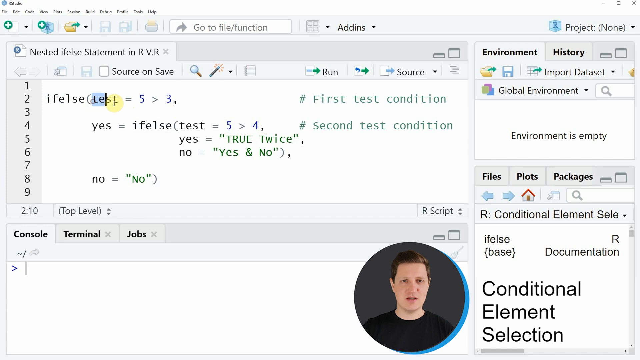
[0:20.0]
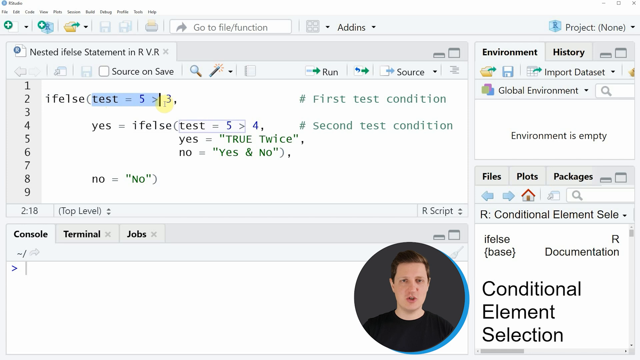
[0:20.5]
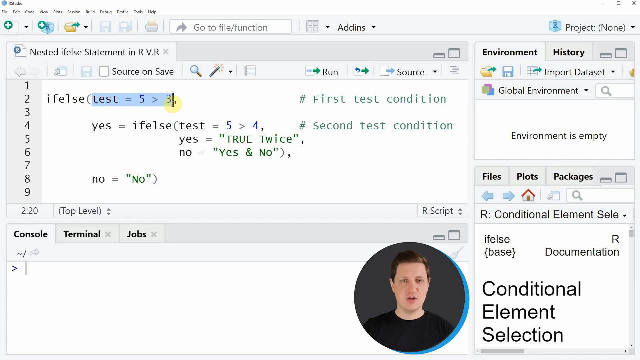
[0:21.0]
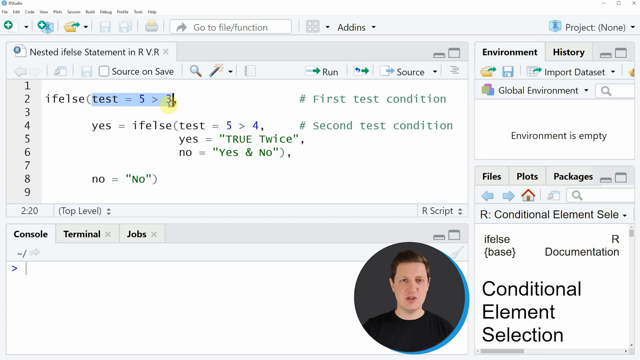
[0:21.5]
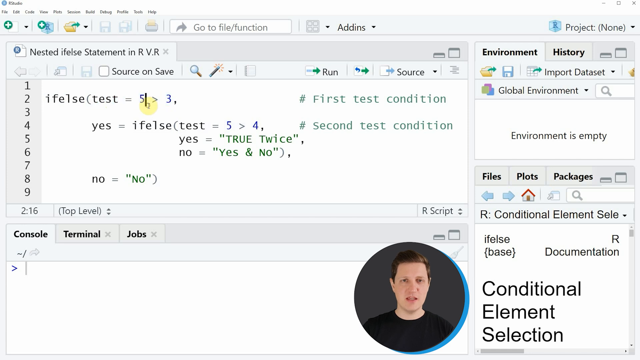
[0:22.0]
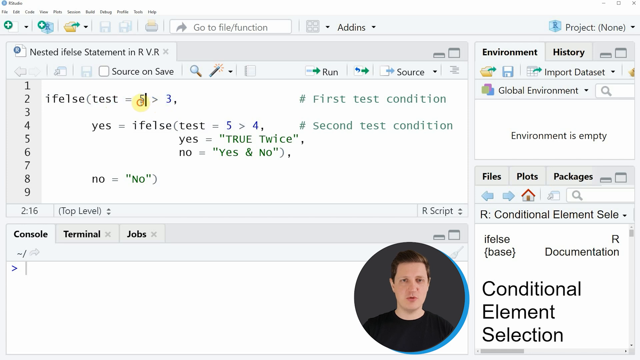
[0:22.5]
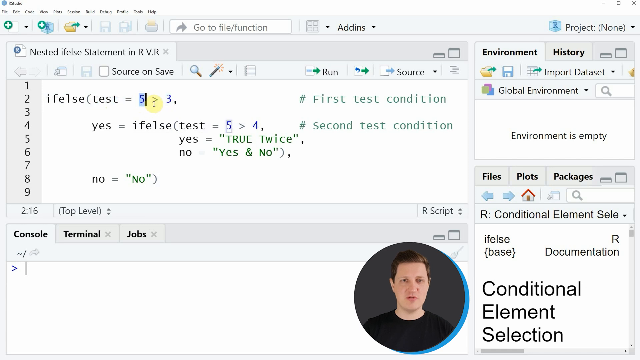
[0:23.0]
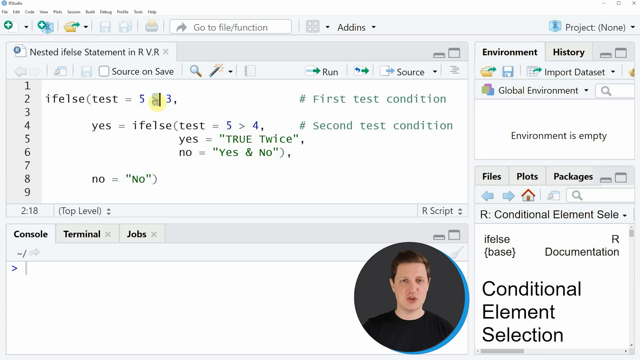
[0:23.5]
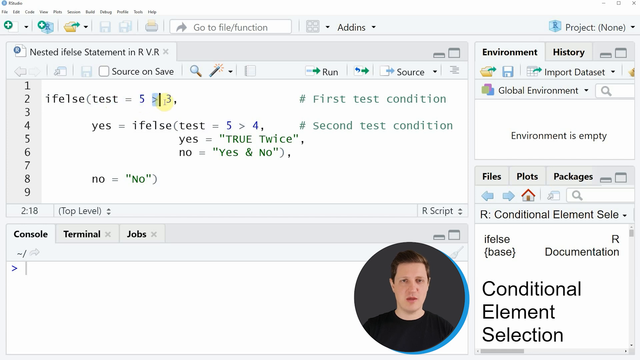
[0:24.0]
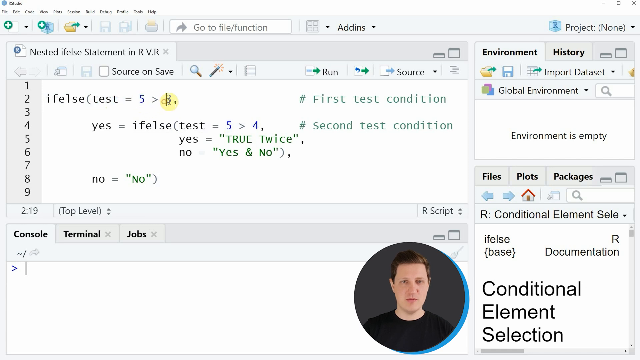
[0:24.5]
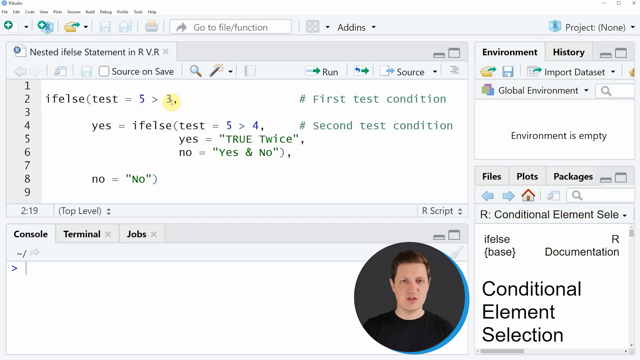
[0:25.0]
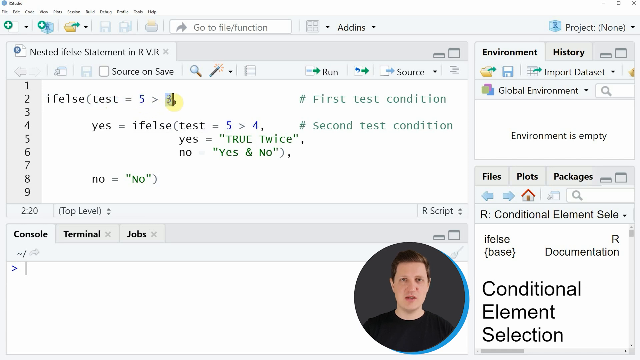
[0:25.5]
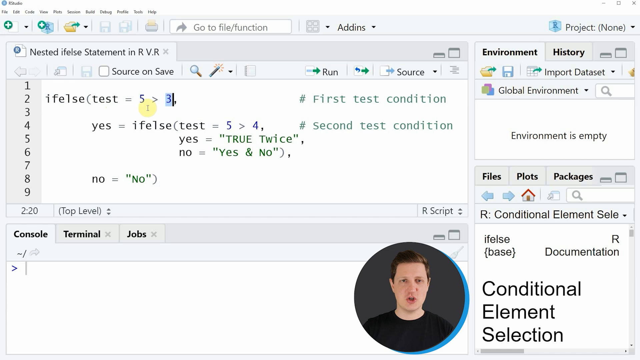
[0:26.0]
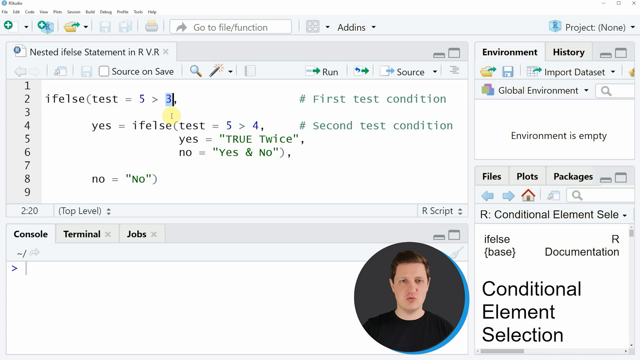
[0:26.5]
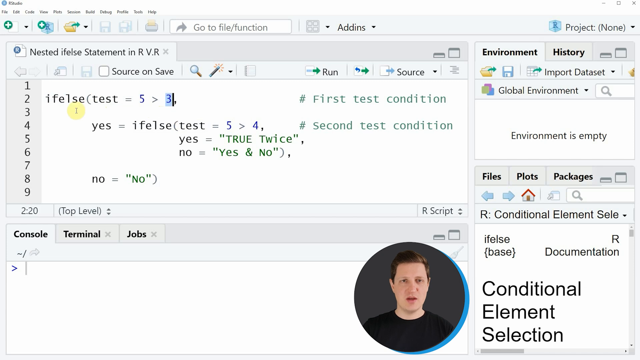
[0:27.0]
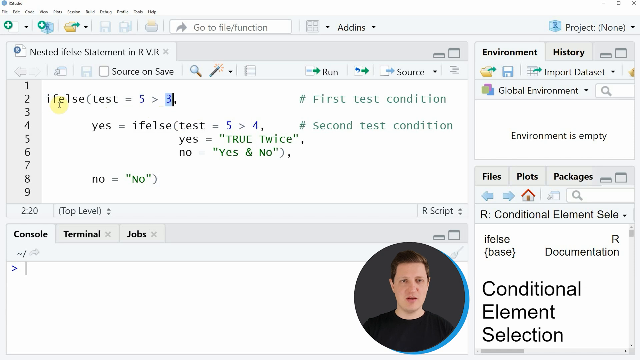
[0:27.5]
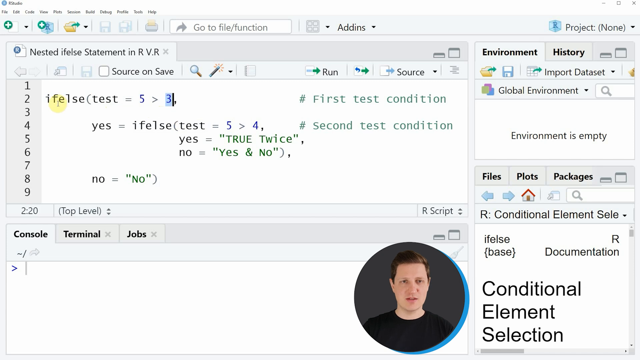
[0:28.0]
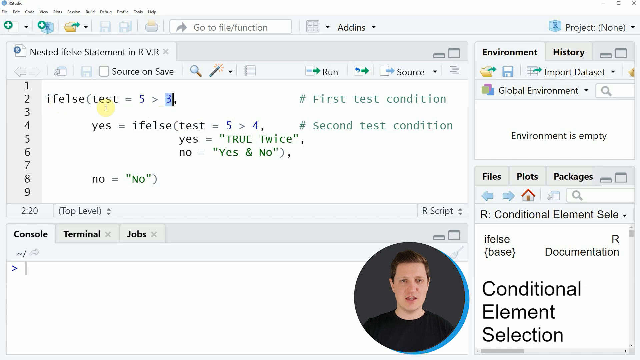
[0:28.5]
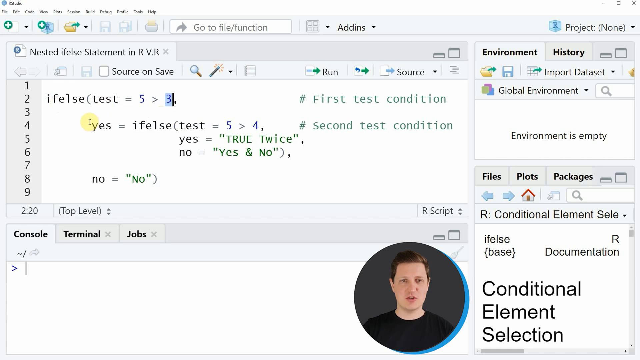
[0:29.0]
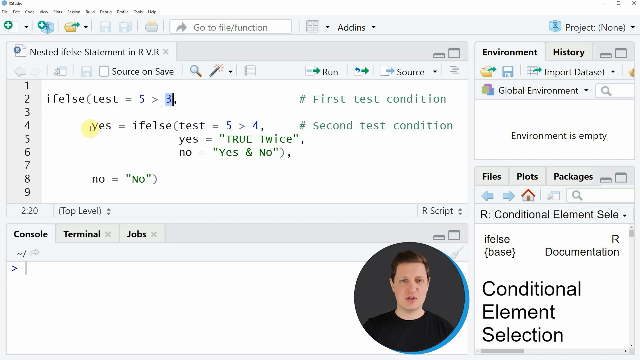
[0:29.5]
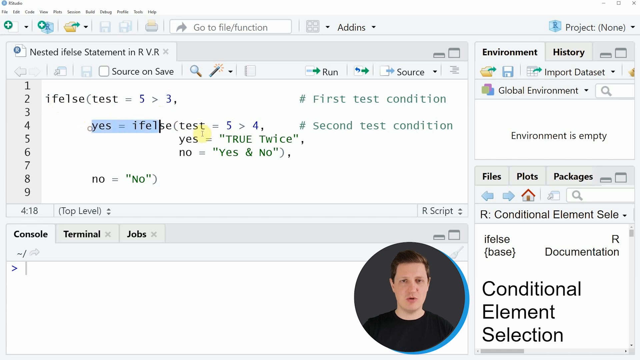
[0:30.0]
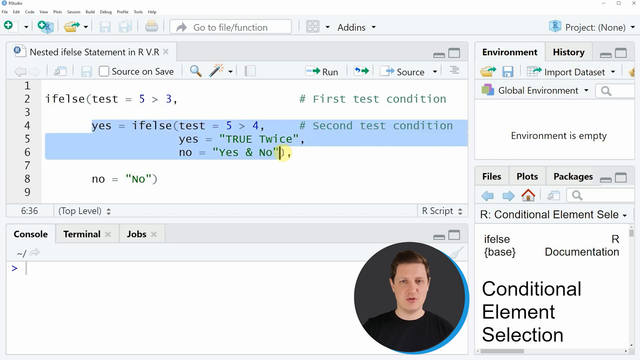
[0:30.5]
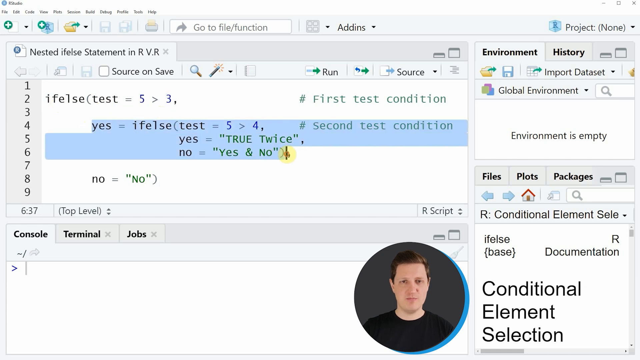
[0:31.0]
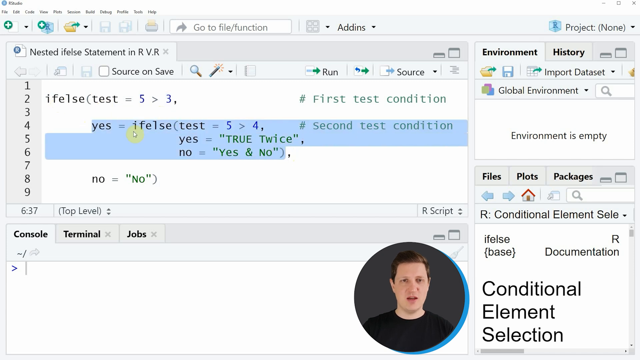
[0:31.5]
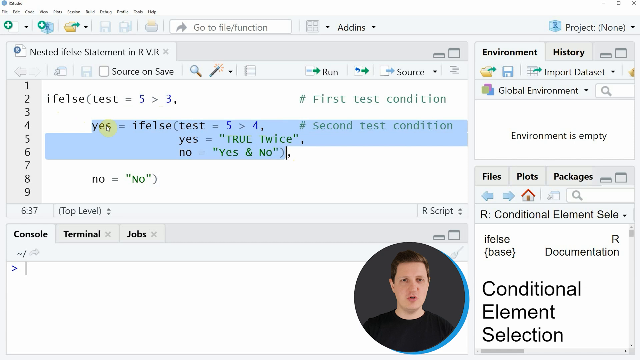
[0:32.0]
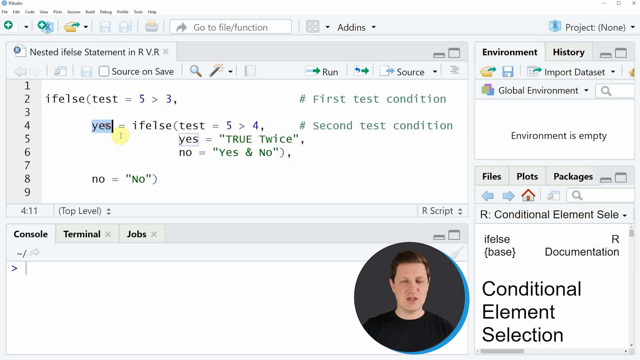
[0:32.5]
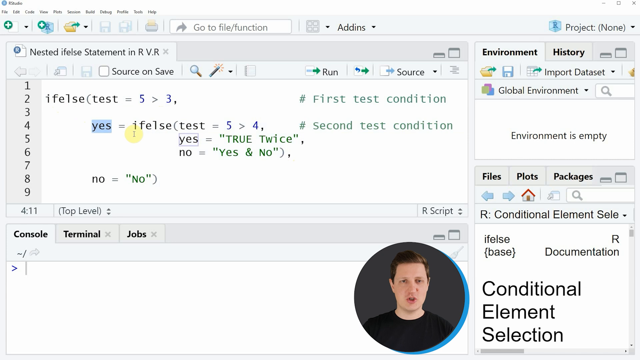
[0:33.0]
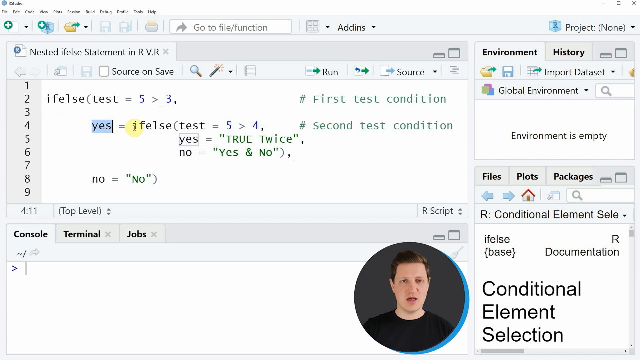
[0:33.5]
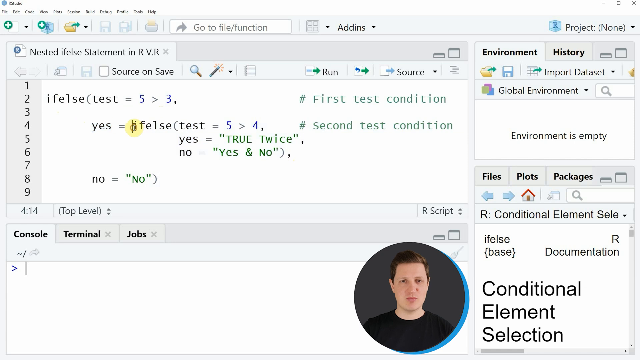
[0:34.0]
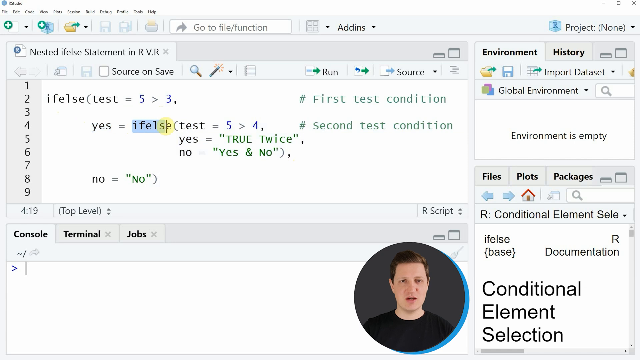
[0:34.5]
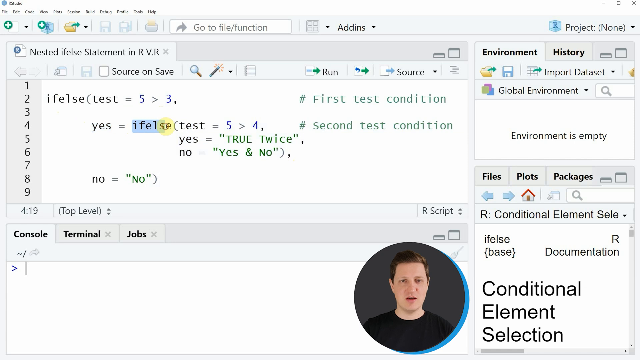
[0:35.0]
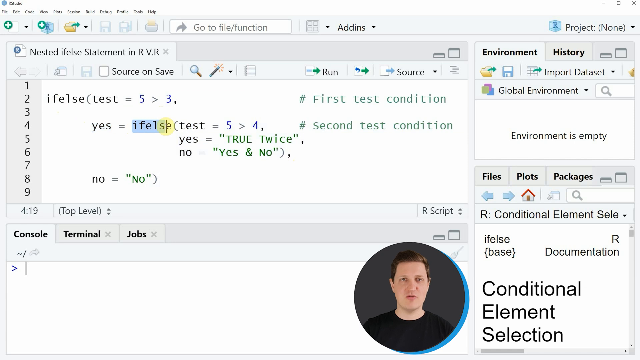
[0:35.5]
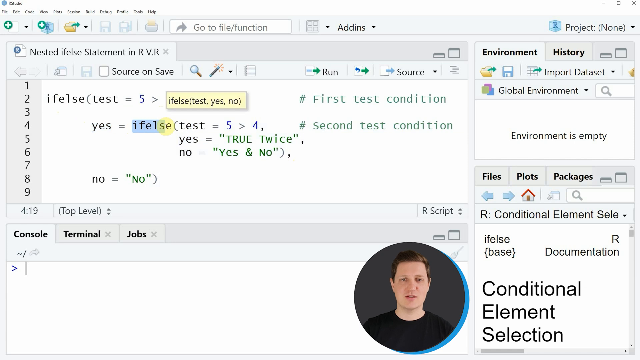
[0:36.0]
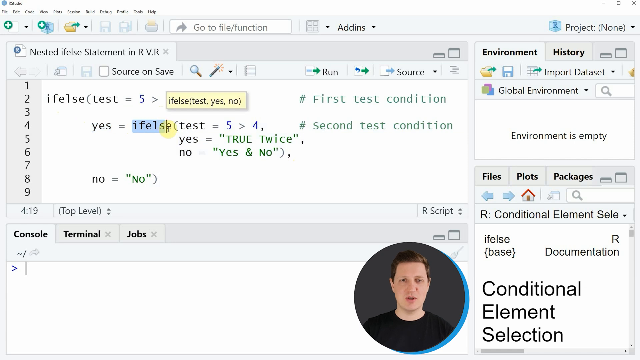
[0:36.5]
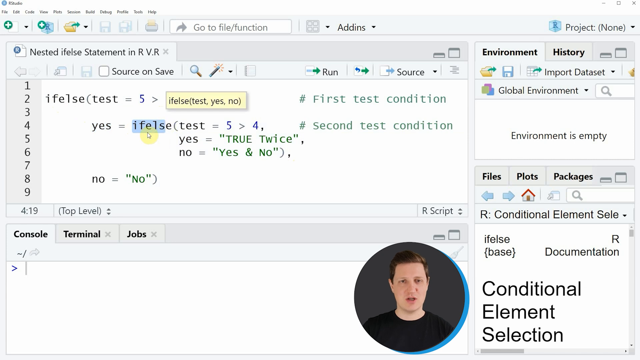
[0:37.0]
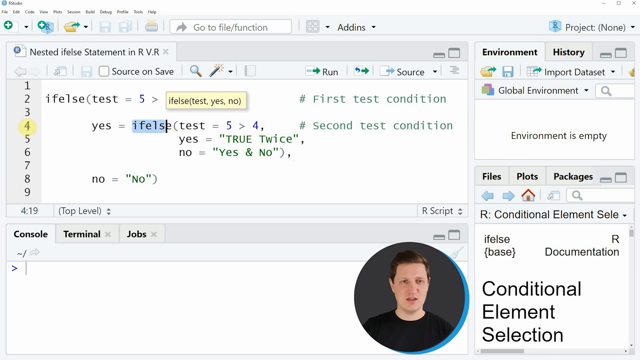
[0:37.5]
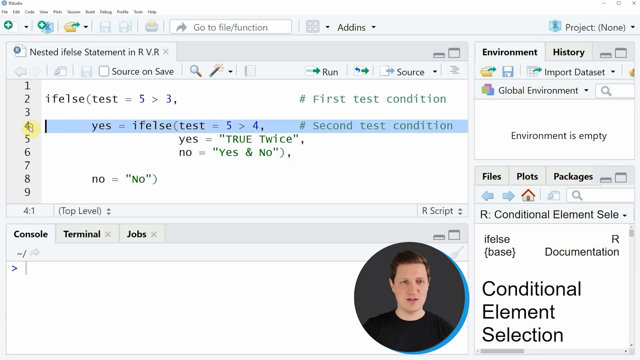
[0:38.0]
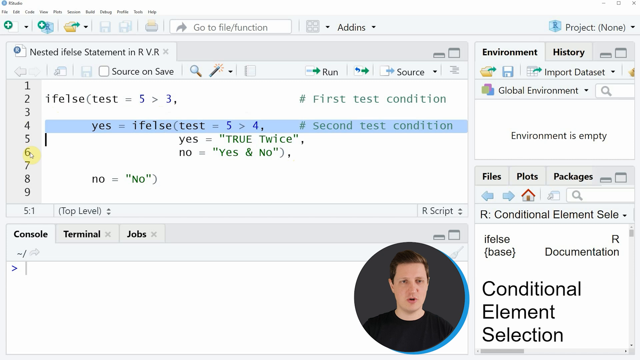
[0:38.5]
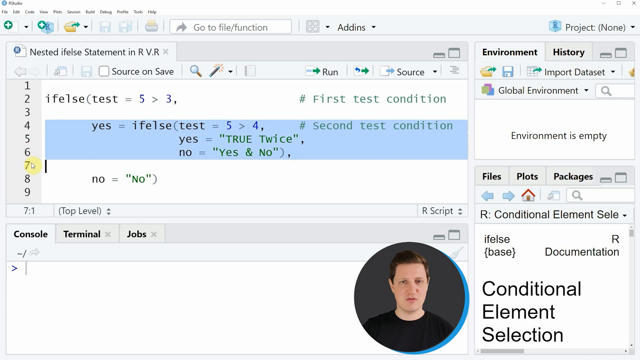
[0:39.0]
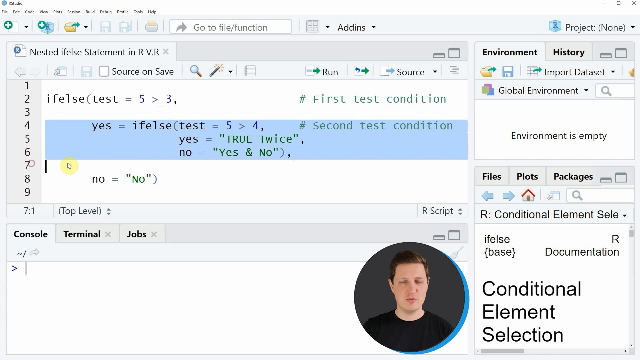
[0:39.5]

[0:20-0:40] The cursor highlights the text on line 2 that says "test = 5 > 3", up to the comma, giving it a blue highlight. He then highlights only the 5, then only the greater-than sign, then only the 3. Moving down to line 4, he highlights all of its text, including the comment "second test condition", then all of the text on line 5 and all of line 6 up to the comma, so lines 4, 5 and 6 are highlighted in blue. Next he selects only the first "yes" on line 4, then highlights the "ifelse" text right next to it after the equal sign. He clicks the number 4 on the left side beside the code, which highlights all of line 4 in blue, and then kind of drags down so that all of lines 5 and 6 are also highlighted.